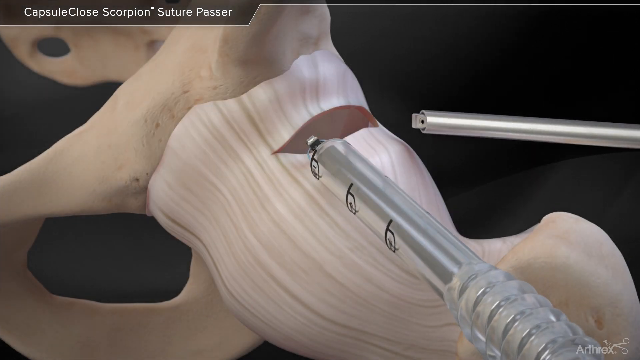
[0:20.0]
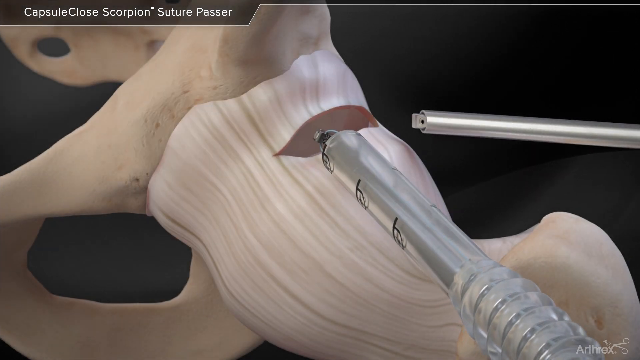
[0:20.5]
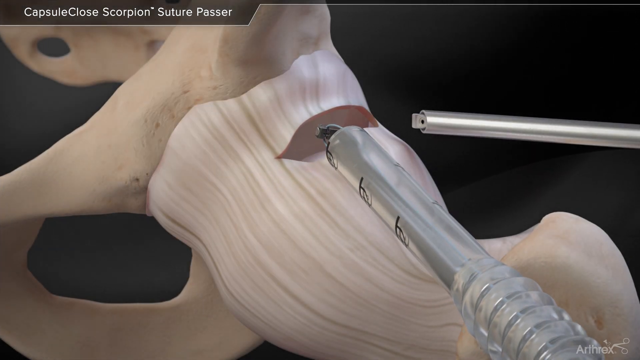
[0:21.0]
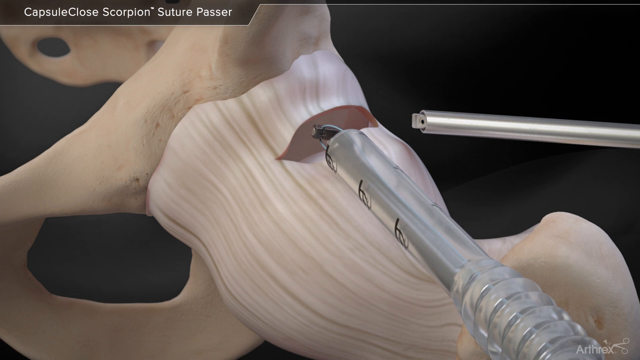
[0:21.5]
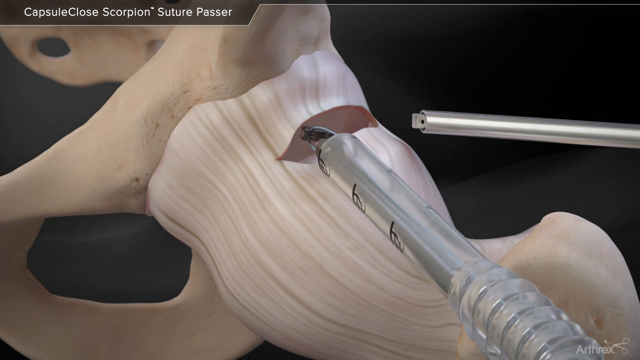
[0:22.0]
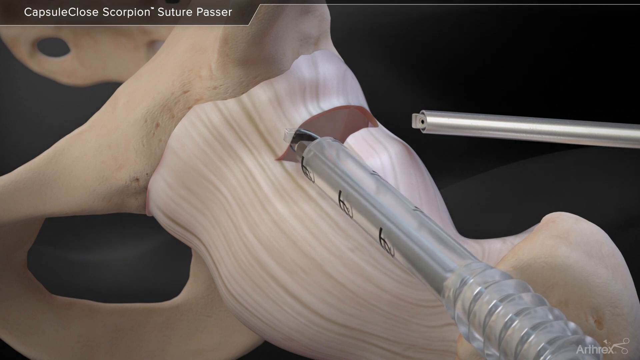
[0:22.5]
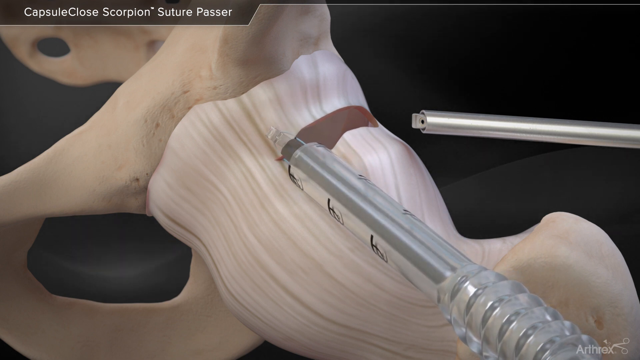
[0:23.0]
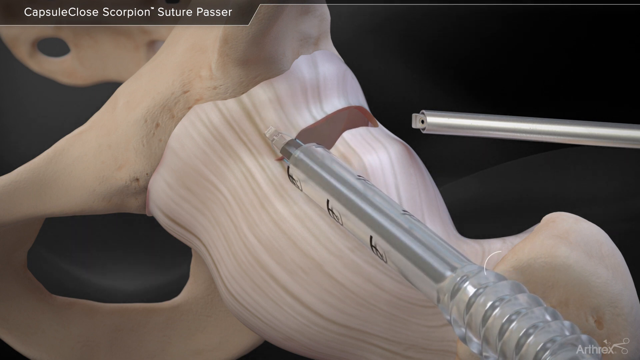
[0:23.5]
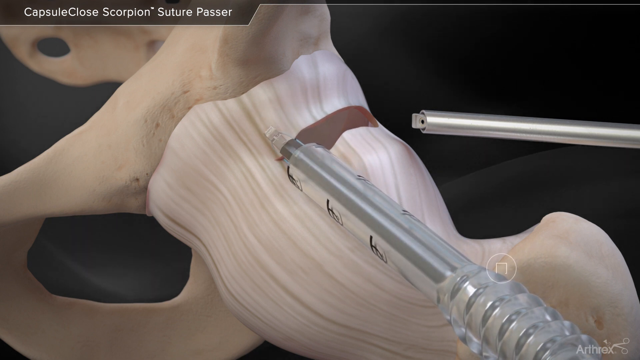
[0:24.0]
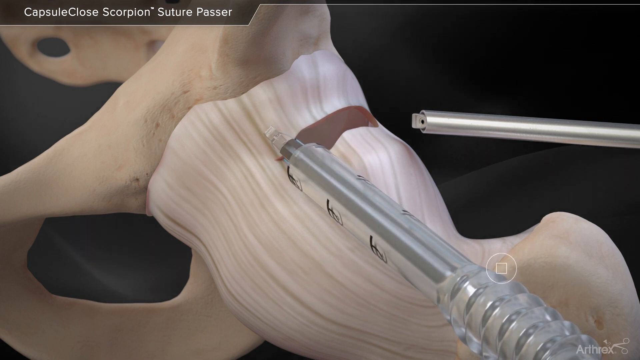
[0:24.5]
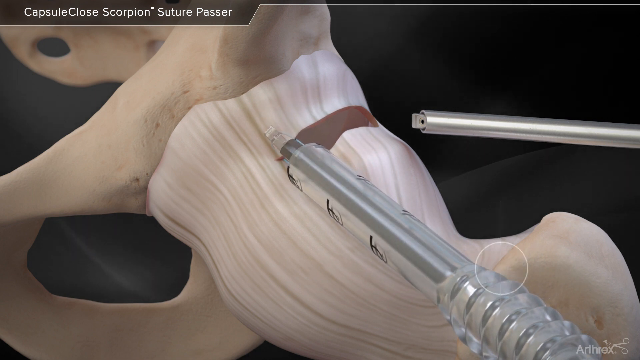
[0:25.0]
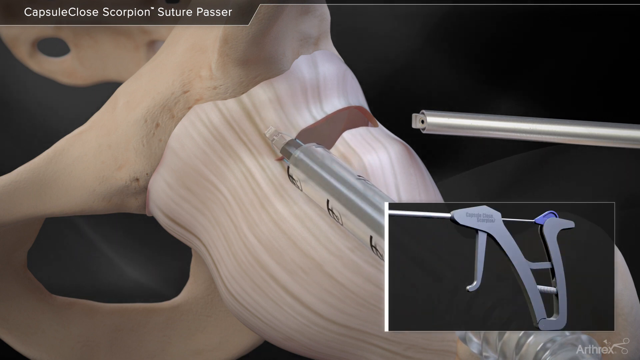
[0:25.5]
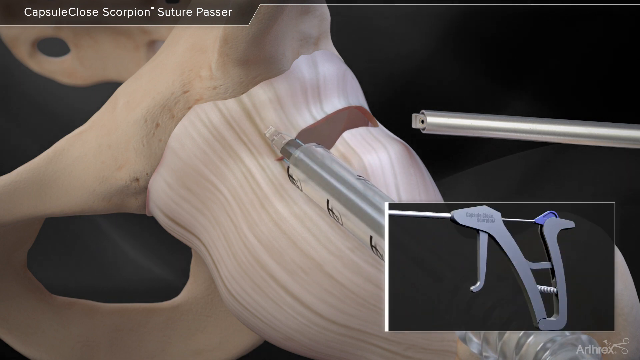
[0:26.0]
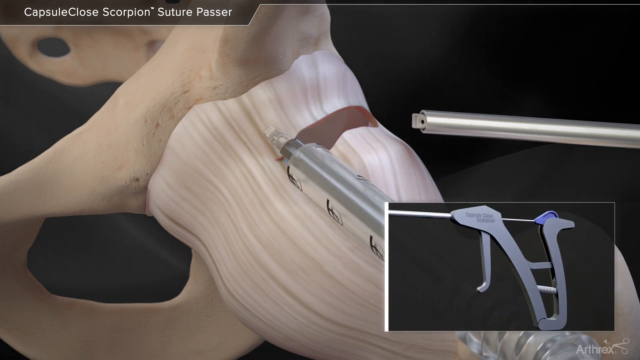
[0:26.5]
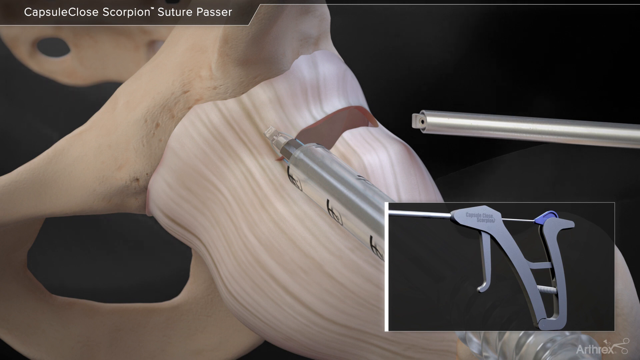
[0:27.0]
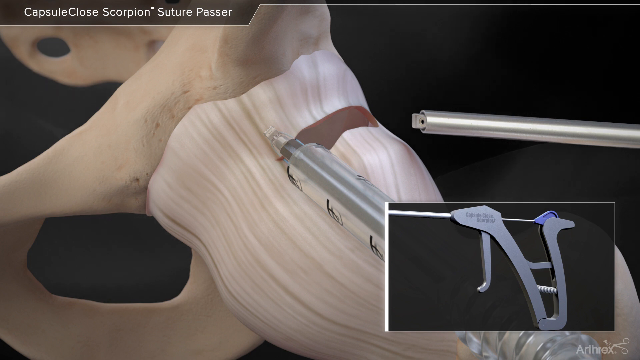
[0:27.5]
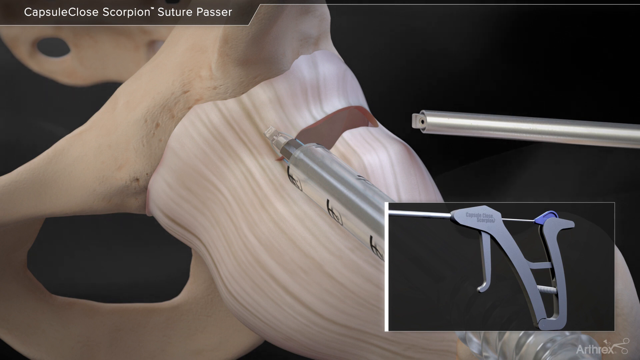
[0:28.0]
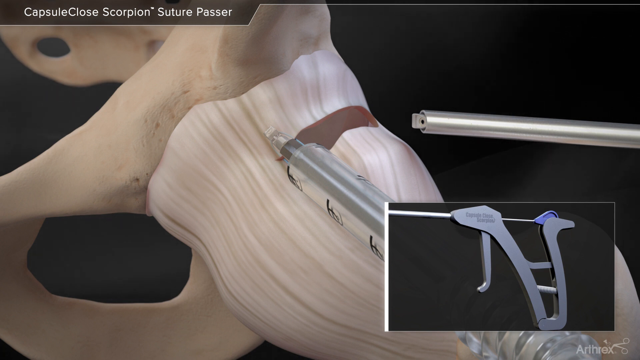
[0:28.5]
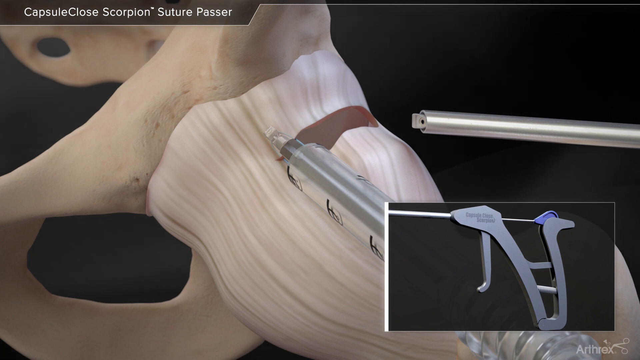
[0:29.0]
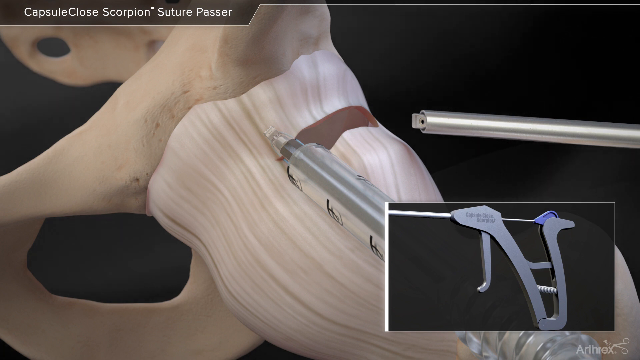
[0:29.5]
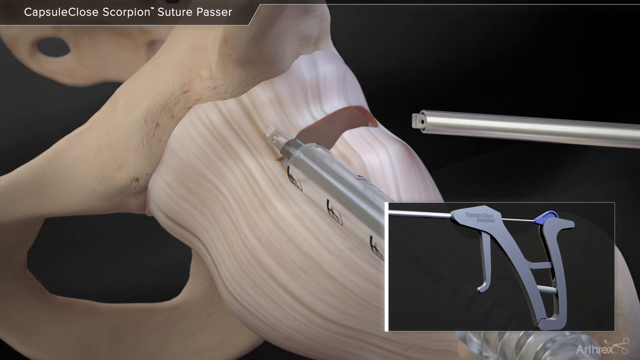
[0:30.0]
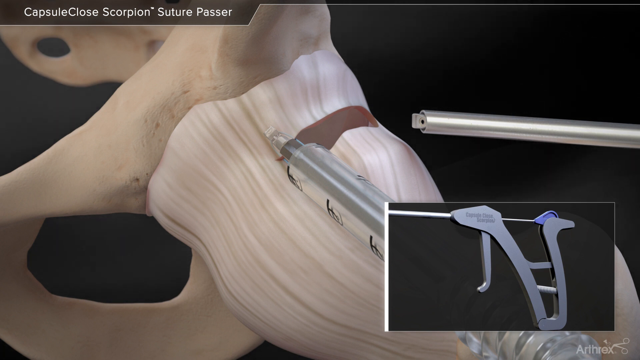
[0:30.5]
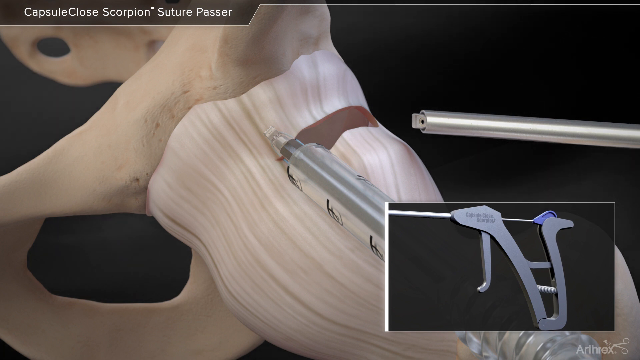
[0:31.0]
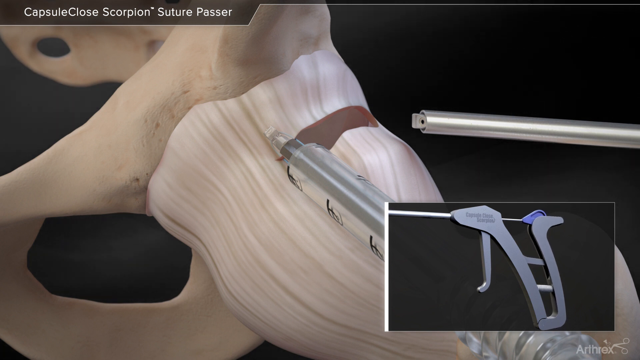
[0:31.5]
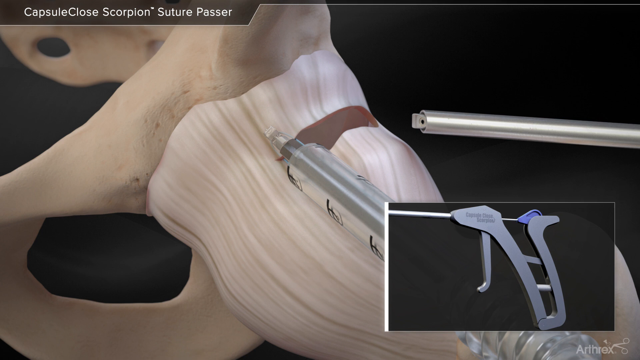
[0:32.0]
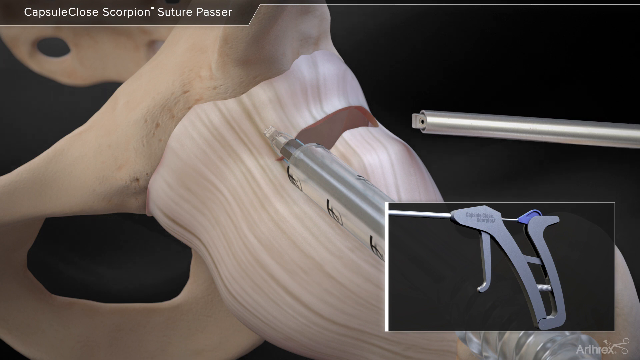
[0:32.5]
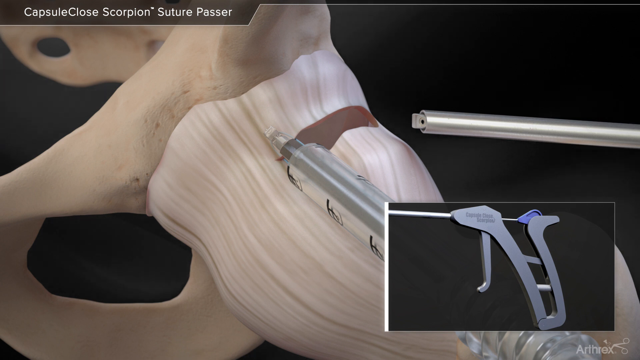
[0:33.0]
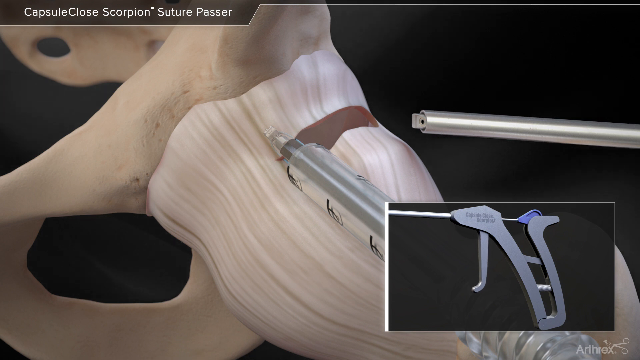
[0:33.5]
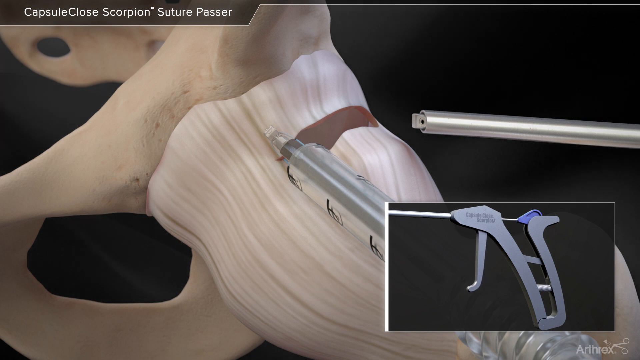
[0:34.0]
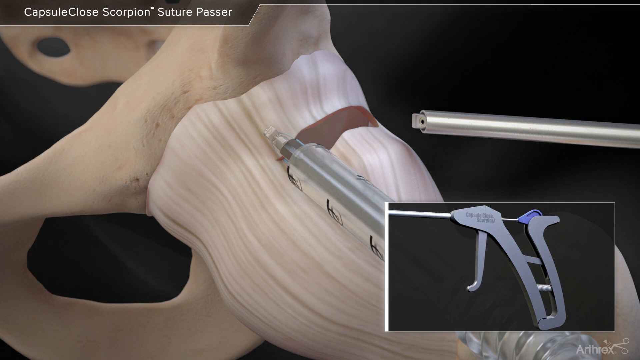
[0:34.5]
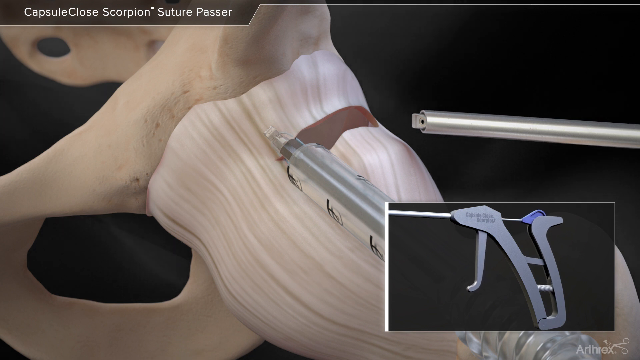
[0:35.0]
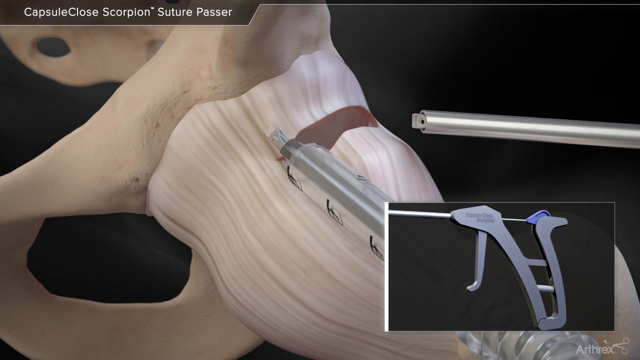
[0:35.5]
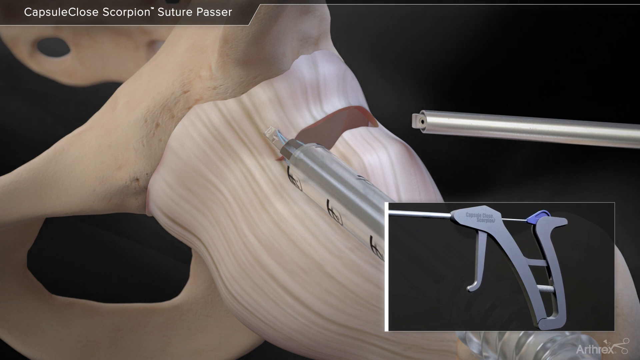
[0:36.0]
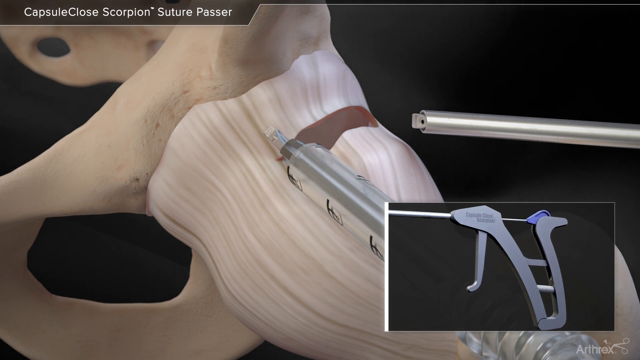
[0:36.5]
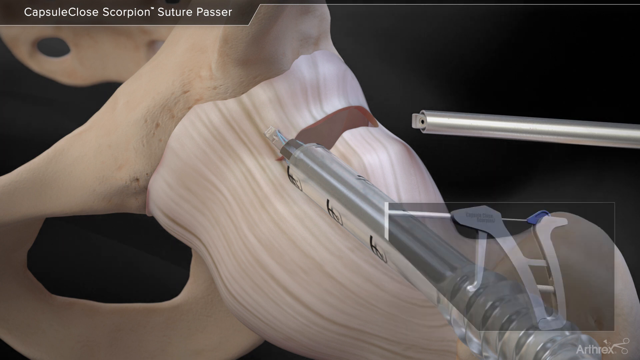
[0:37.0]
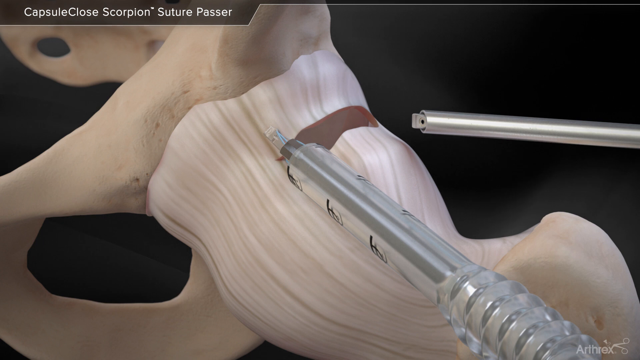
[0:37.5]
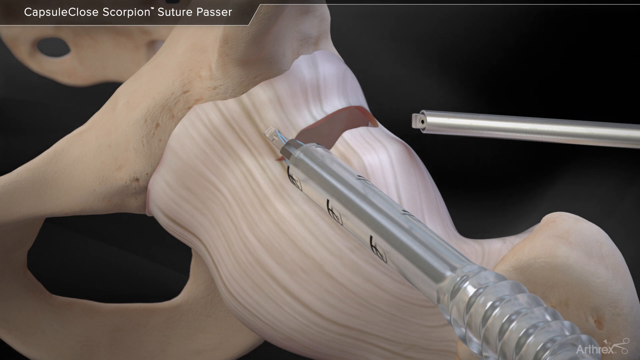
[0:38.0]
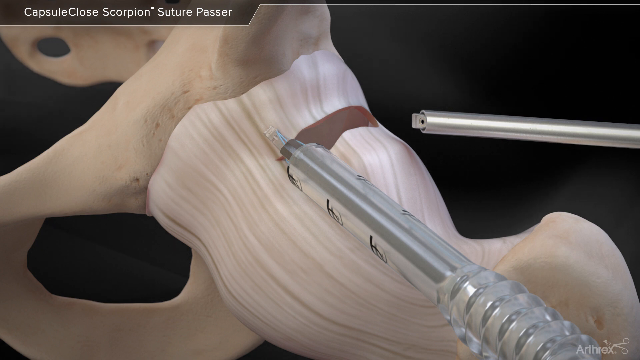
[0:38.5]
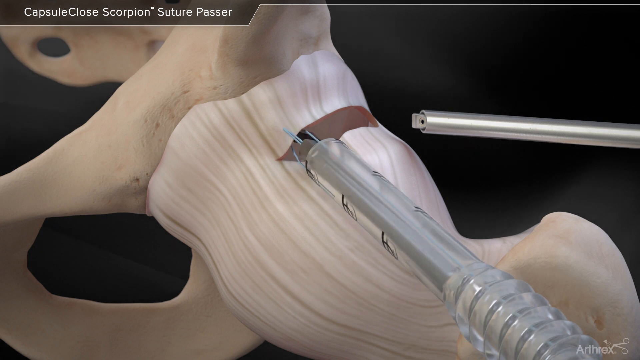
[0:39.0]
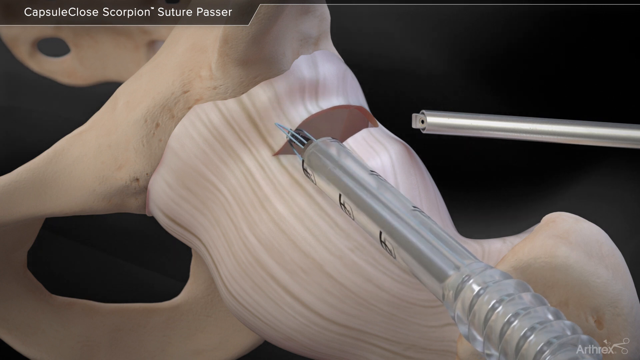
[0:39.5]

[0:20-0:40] The animation continues to show a medical procedure. An instrument appears that looks like a glue gun, though it apparently is not one; it resembles a tool used for piercing ears.